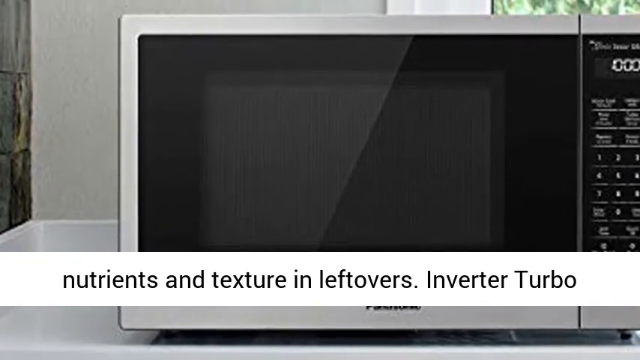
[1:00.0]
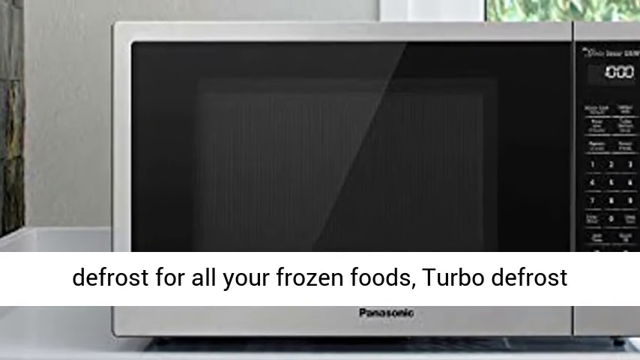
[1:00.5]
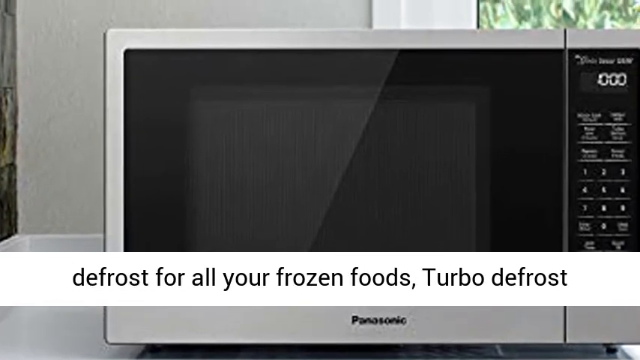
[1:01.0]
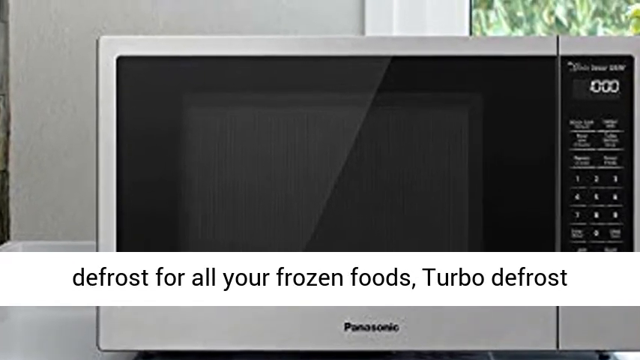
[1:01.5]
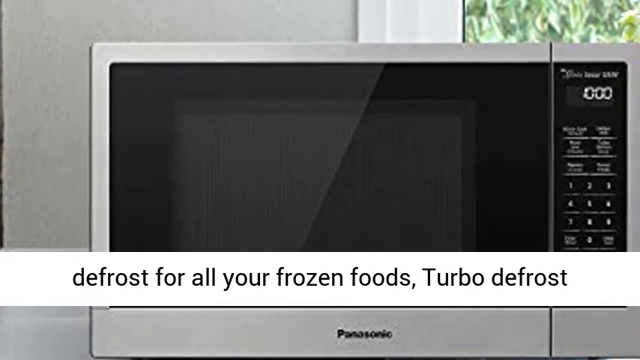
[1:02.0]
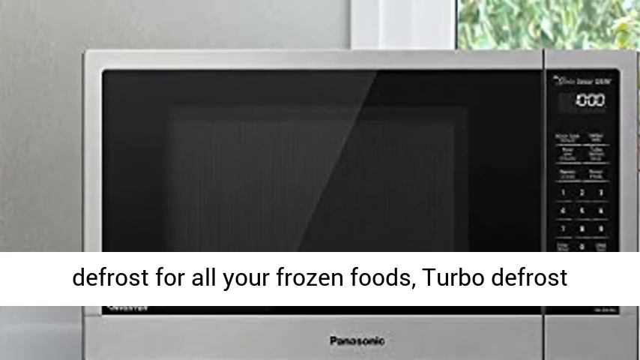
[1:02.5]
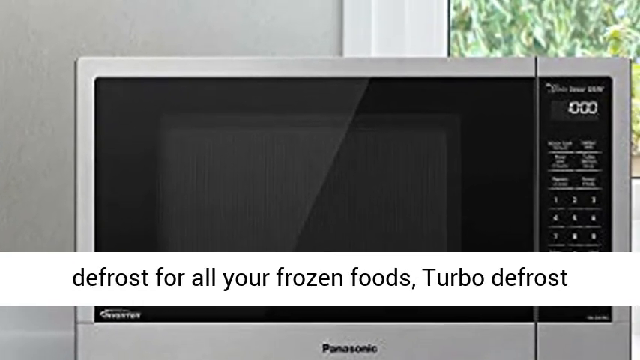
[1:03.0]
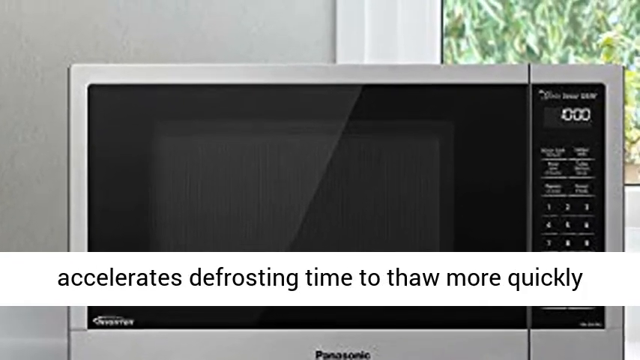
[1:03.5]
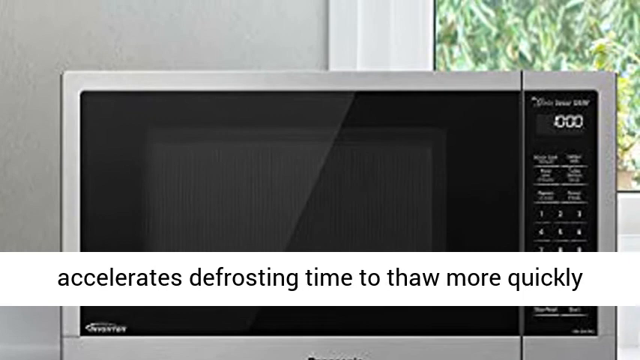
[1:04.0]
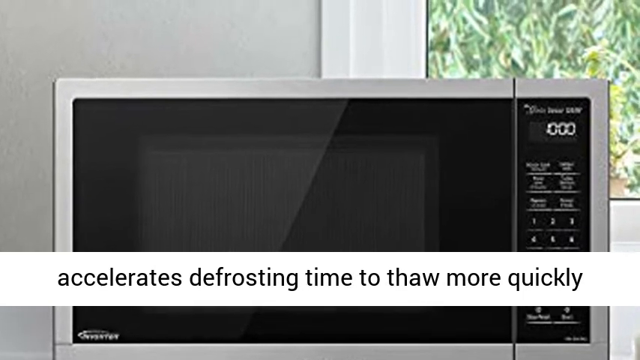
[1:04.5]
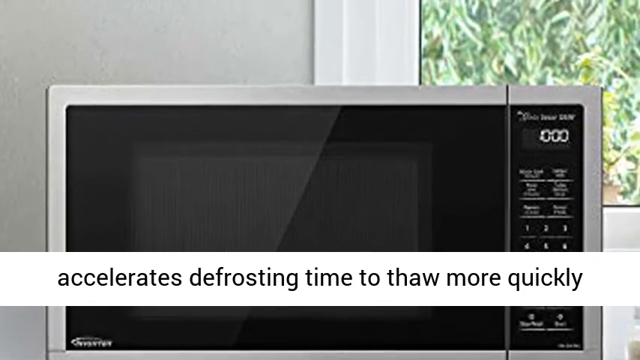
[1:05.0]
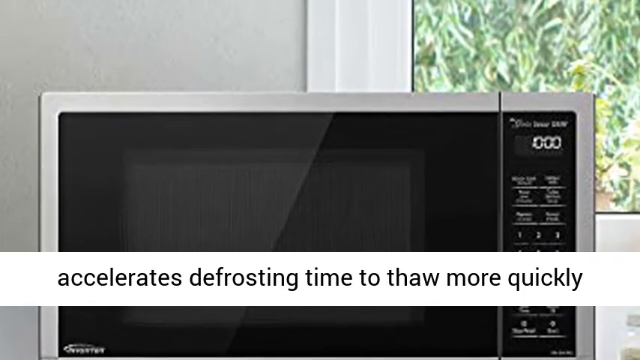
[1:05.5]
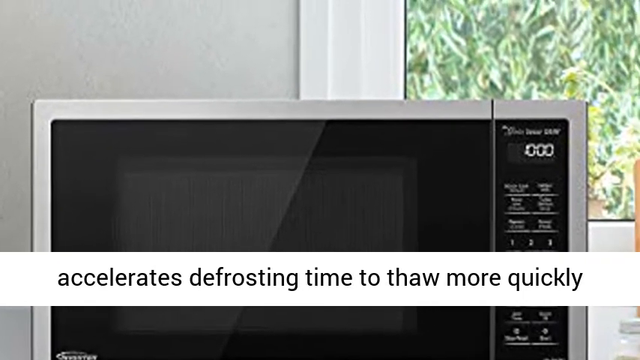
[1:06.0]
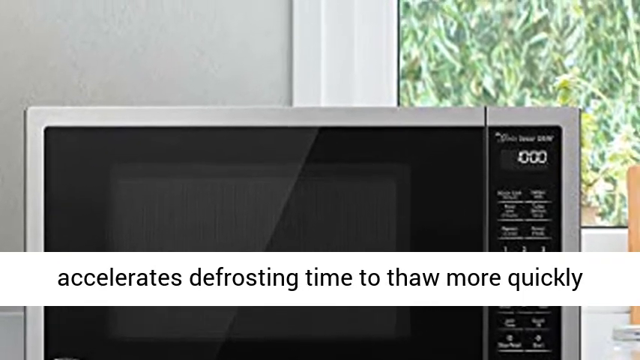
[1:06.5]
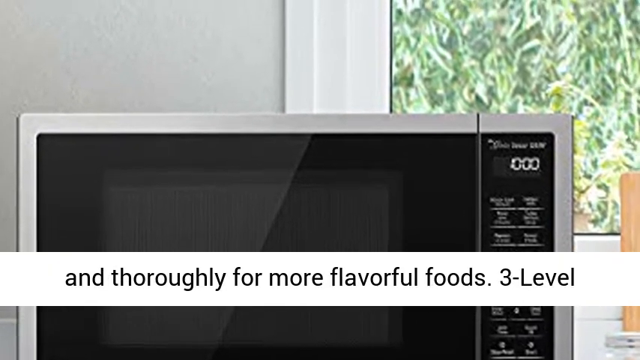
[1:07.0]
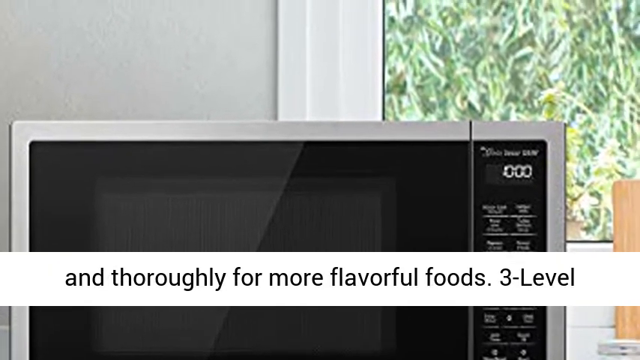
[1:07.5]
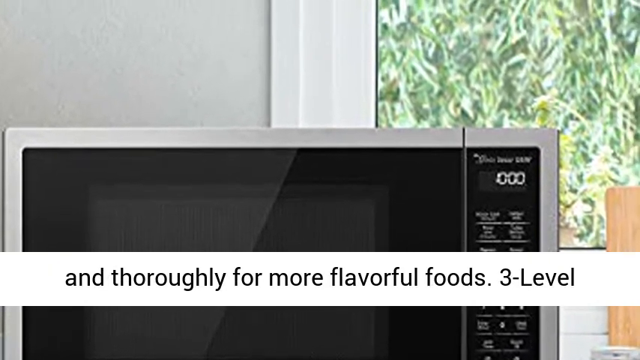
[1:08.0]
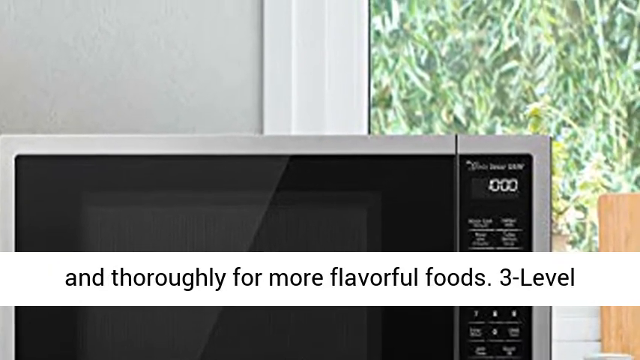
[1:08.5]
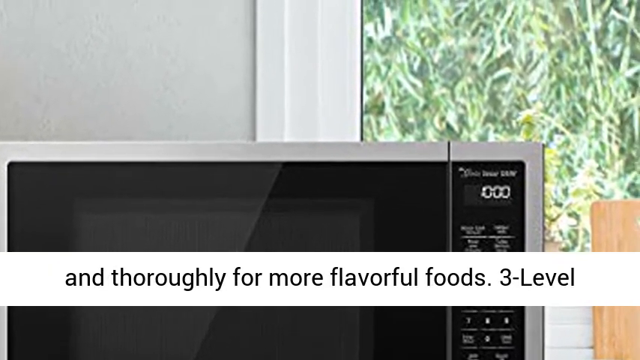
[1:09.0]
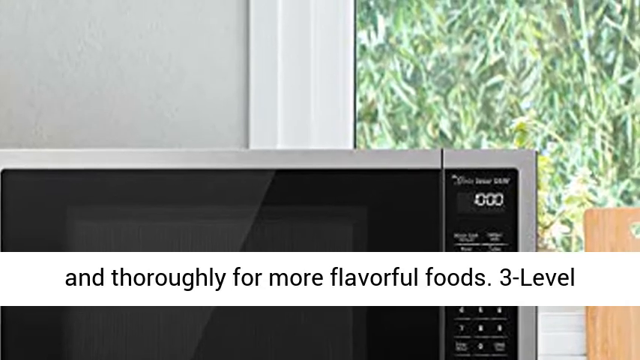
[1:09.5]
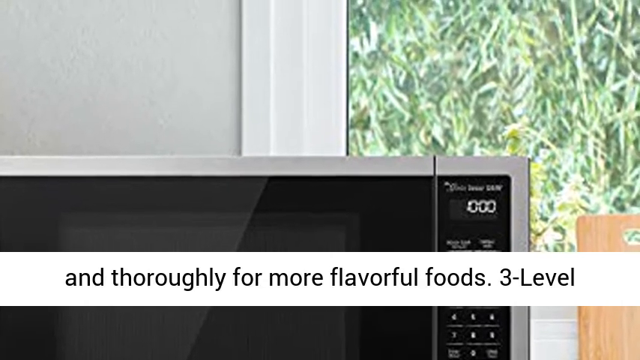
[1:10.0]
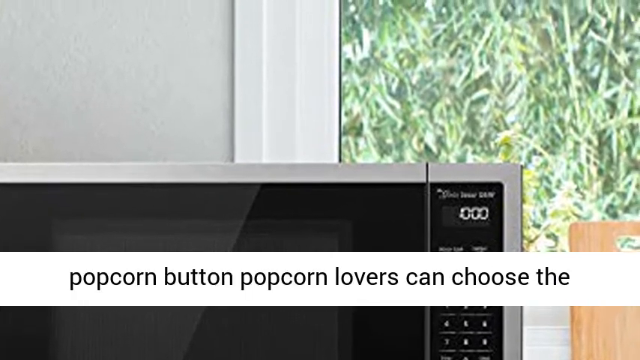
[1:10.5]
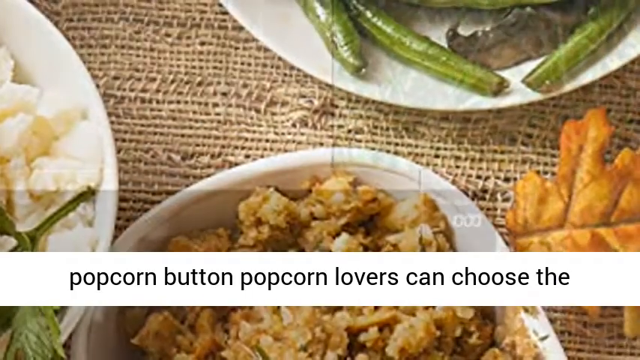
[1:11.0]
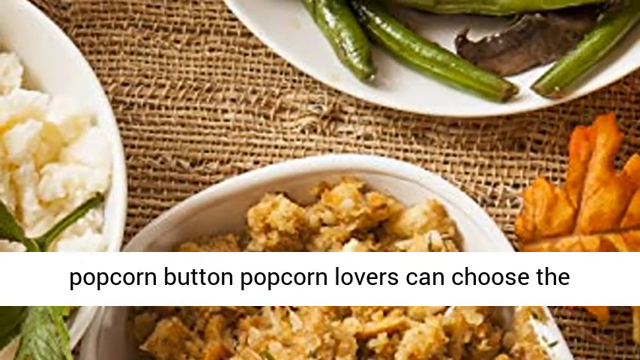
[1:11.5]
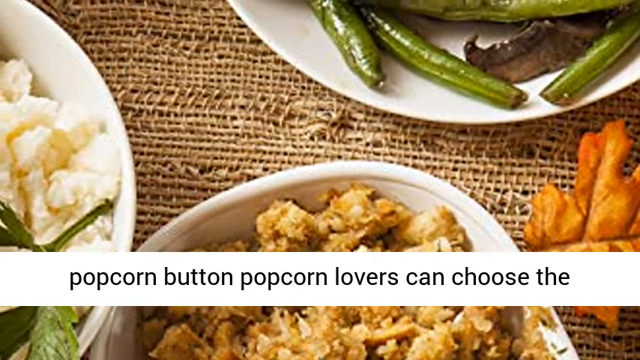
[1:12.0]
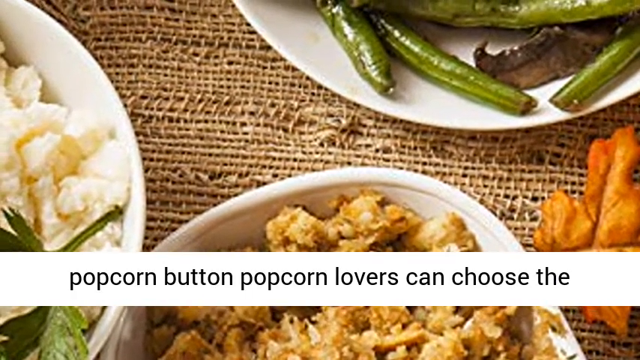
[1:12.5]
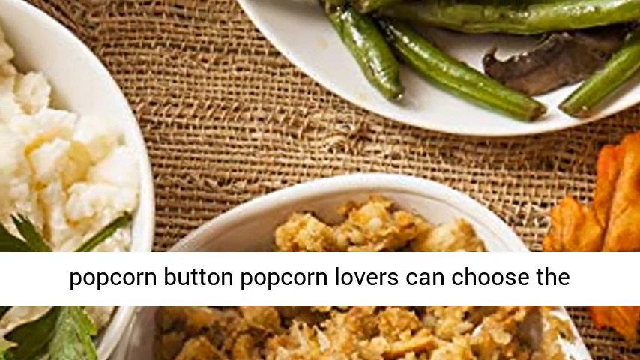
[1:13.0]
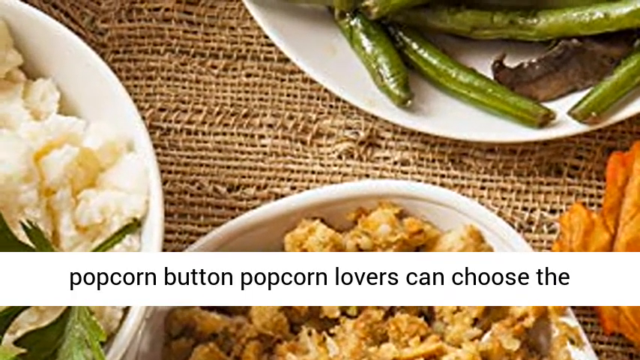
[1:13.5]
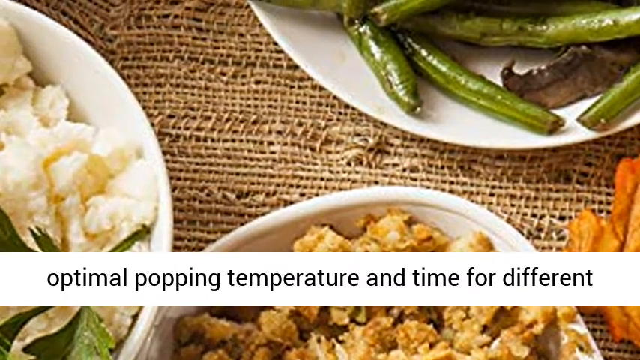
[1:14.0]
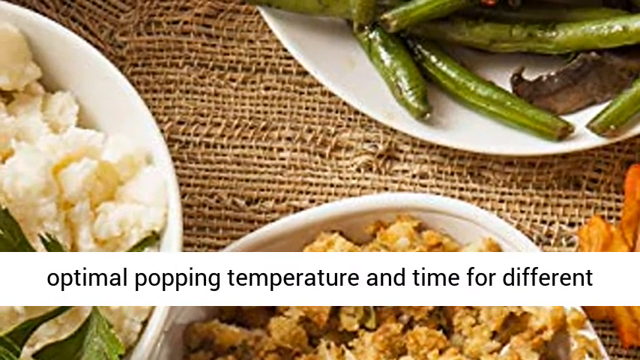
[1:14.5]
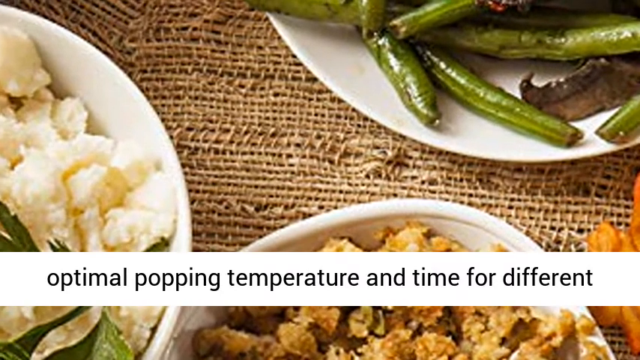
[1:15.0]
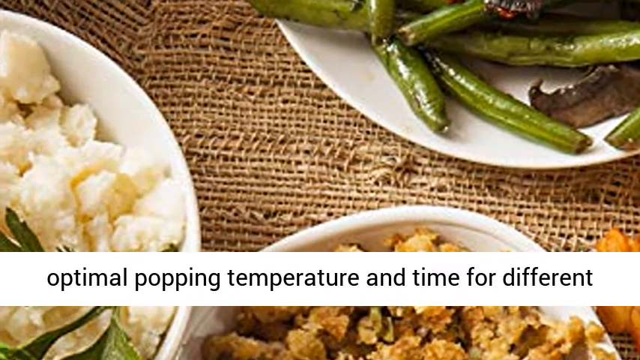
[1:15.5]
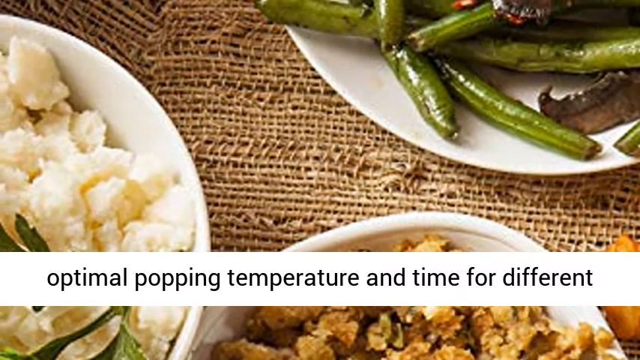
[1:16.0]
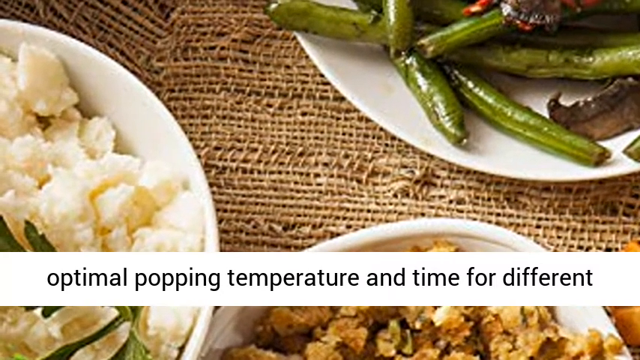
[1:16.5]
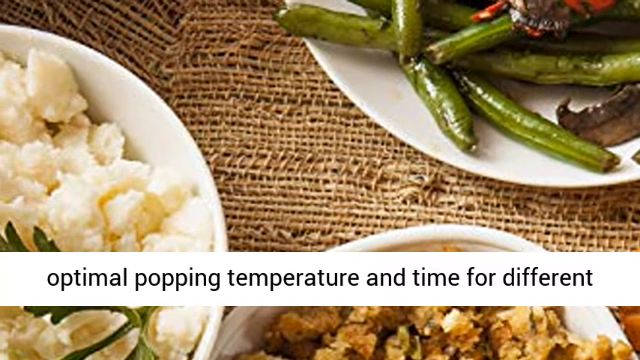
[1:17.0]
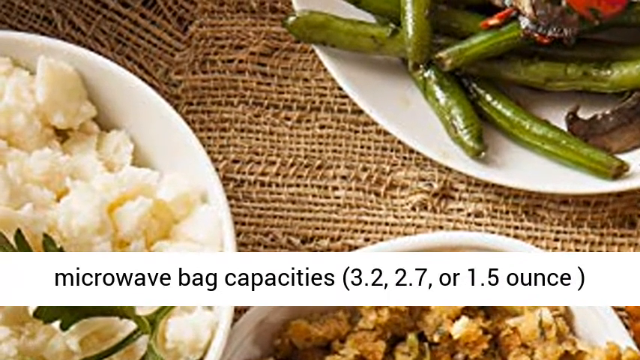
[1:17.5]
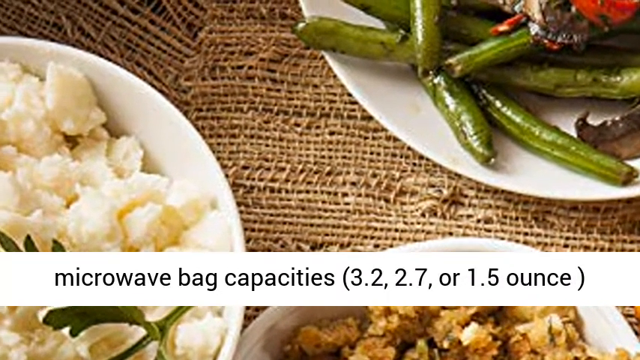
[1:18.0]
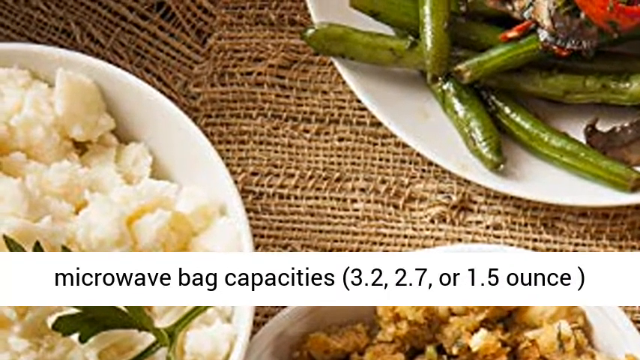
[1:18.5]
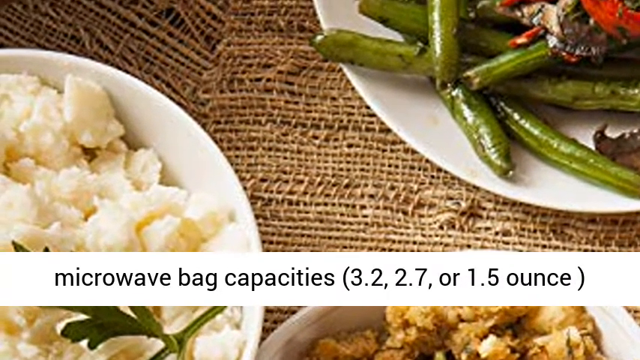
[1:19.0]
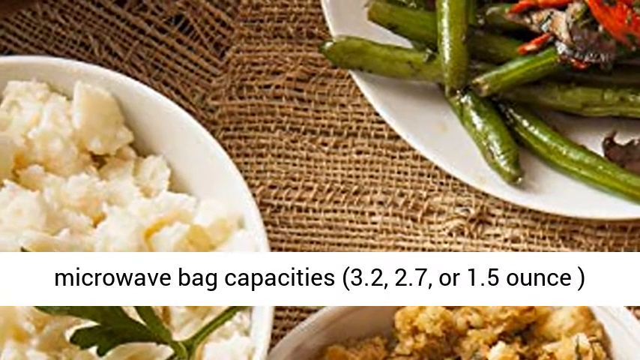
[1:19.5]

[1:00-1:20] The Panasonic 1200-watt microwave oven is still shown, with black Panasonic writing at the bottom, a silver periphery that looks chrome, and a black body. The buttons are black with white letters and commands. The center is clear, with black around it. The text at the bottom continues: "defrost all your frozen foods. Turbo defrost accelerates defrosting time to thaw more quickly and thoroughly for more flavorful foods. Three-level popcorn button. Popcorn lovers can choose the optimal popping temperature and time for different microwave bag capacities (3.2, 2.7, or 1.5 ounce)".